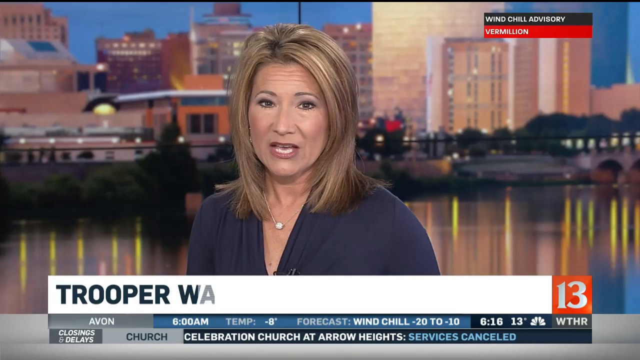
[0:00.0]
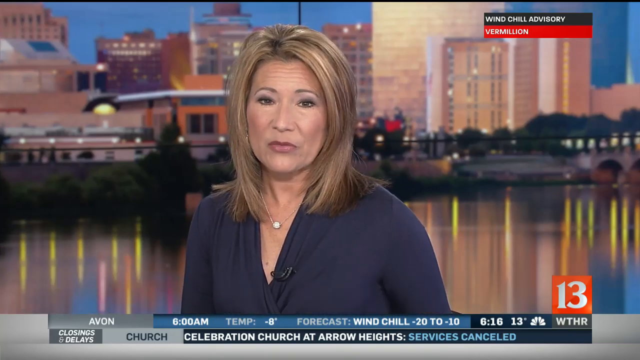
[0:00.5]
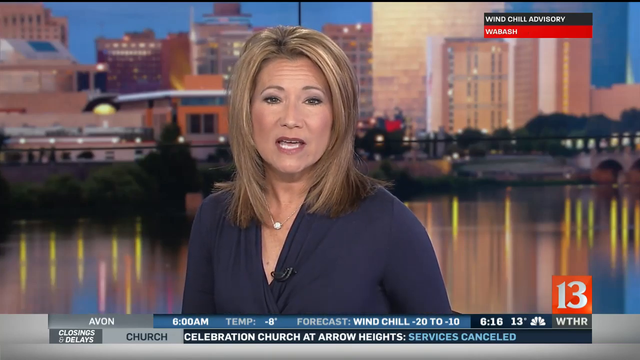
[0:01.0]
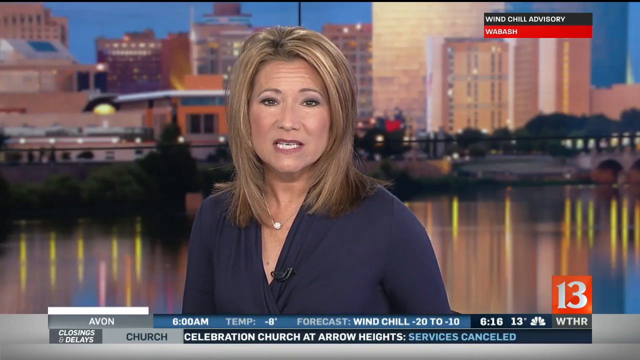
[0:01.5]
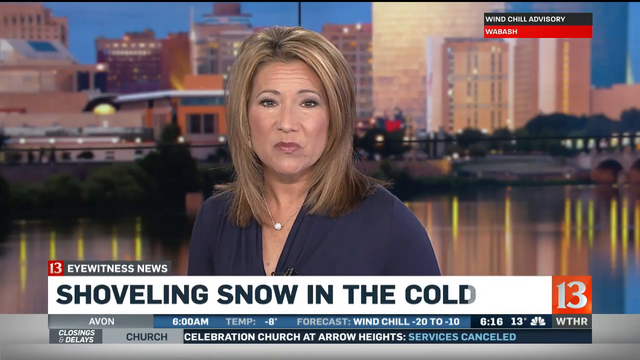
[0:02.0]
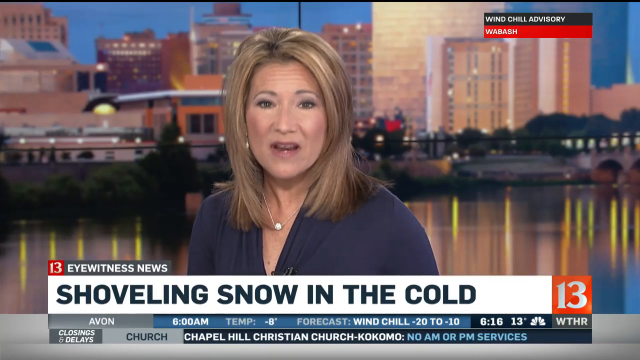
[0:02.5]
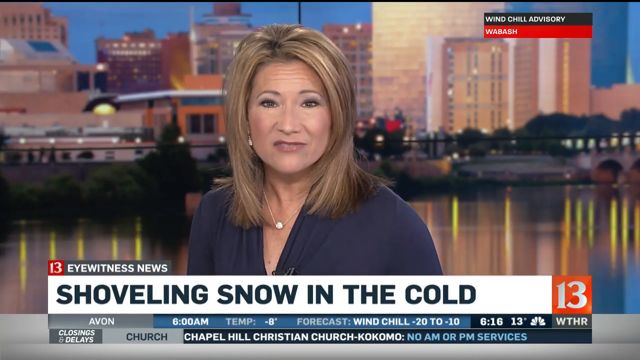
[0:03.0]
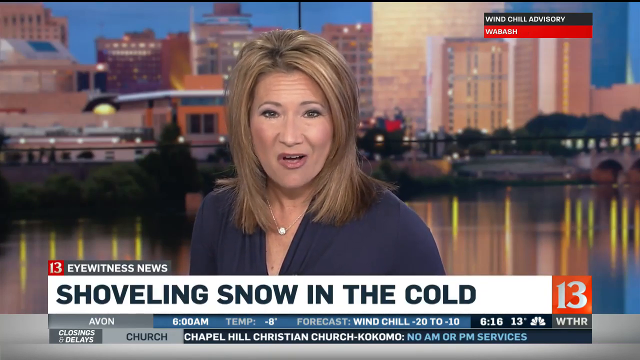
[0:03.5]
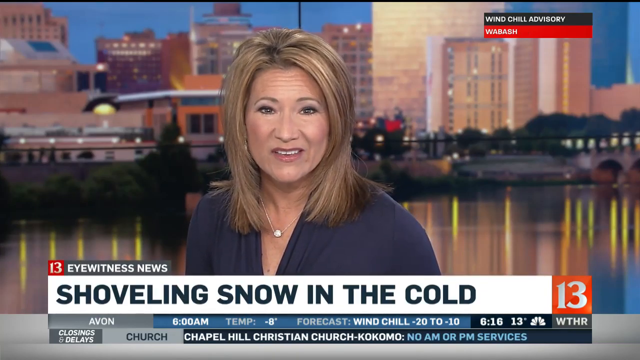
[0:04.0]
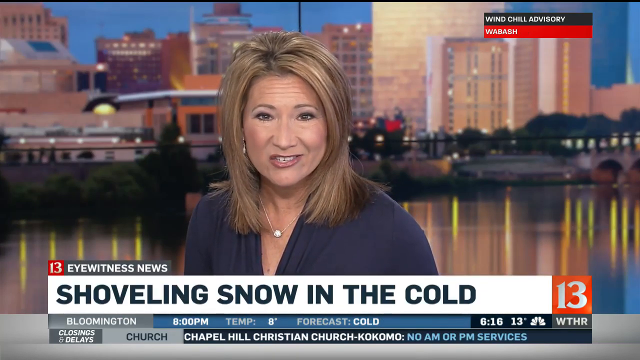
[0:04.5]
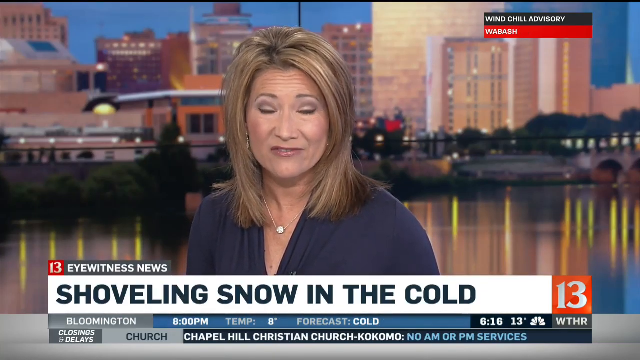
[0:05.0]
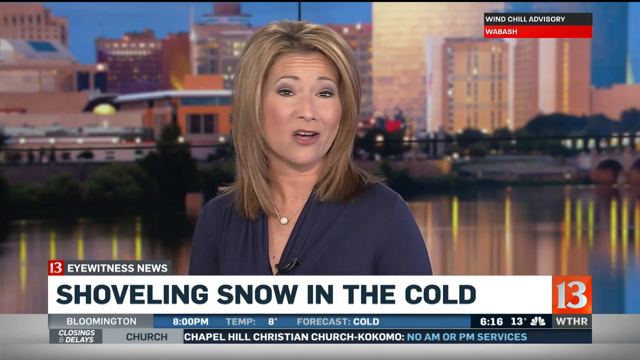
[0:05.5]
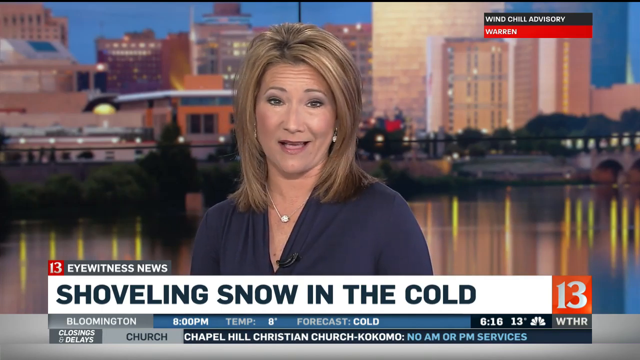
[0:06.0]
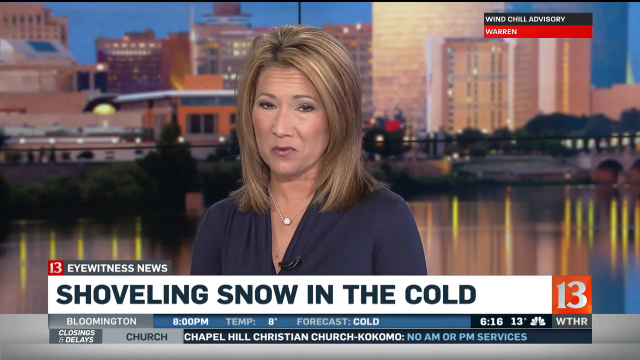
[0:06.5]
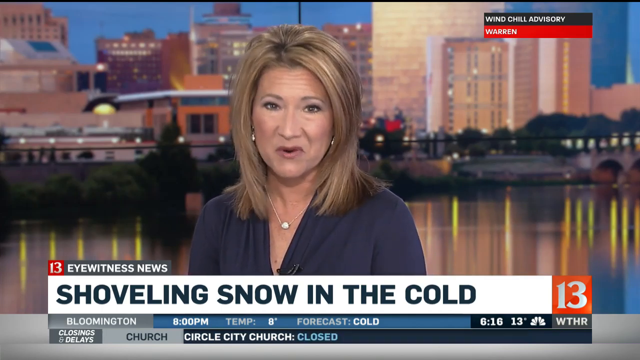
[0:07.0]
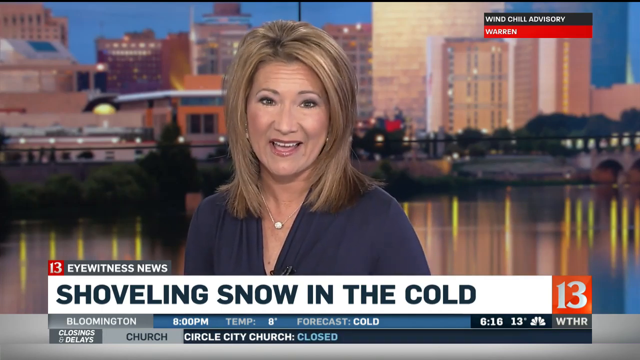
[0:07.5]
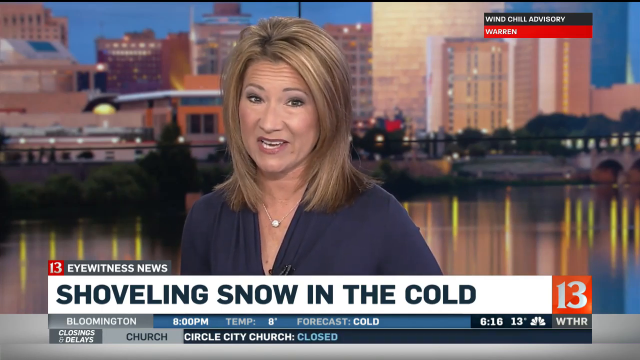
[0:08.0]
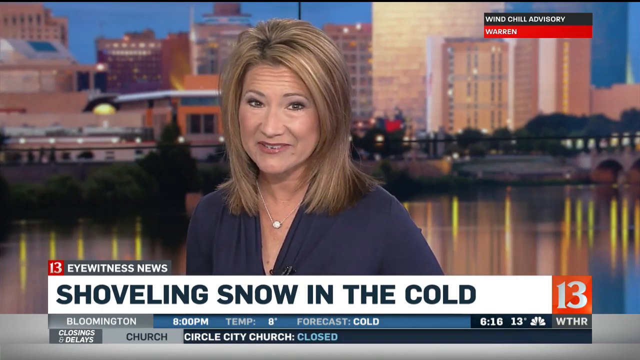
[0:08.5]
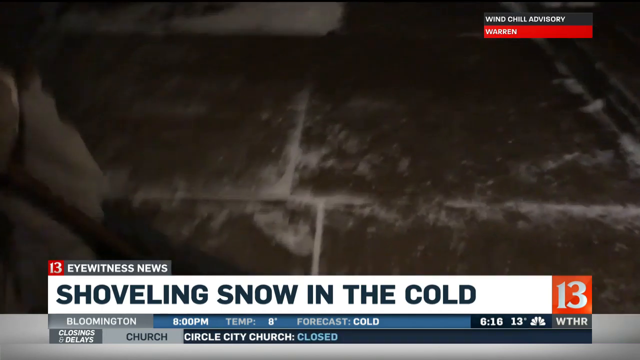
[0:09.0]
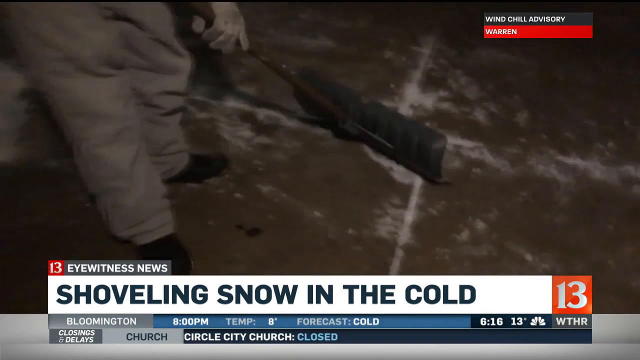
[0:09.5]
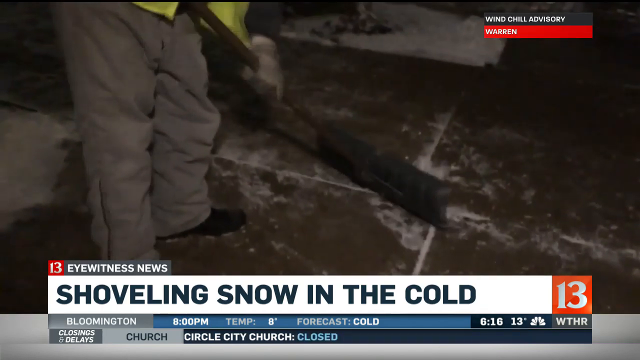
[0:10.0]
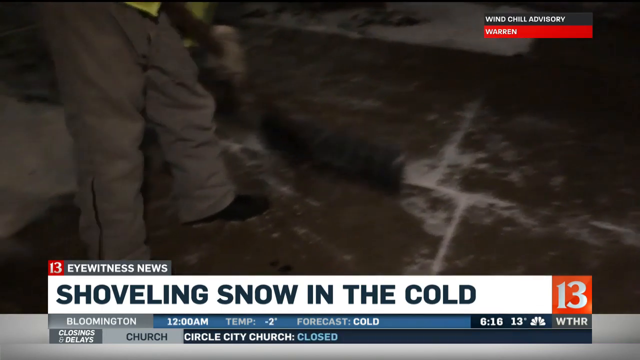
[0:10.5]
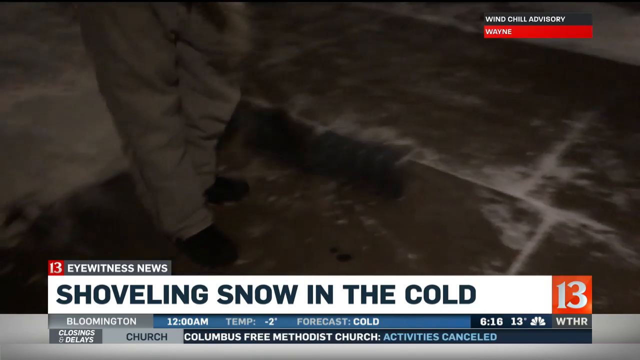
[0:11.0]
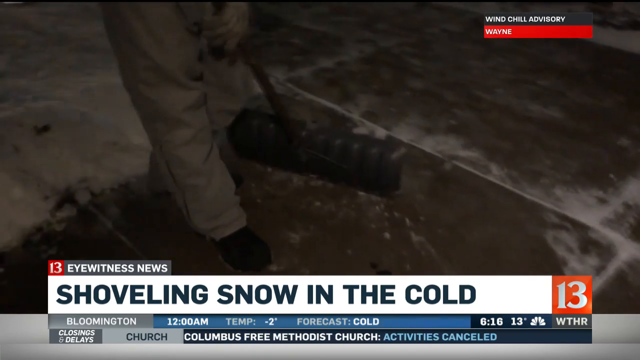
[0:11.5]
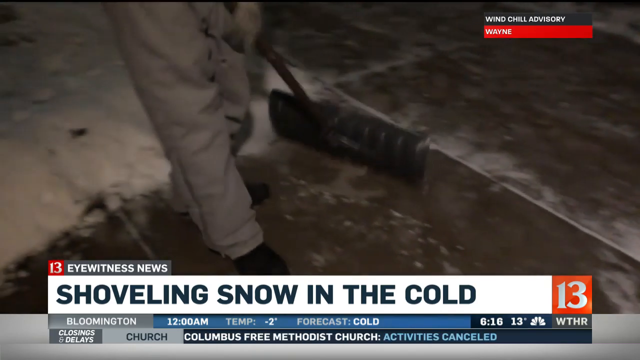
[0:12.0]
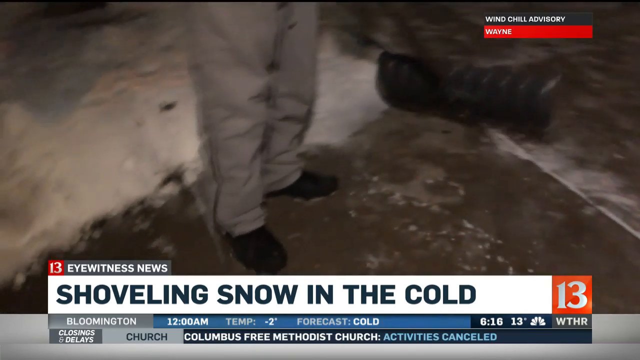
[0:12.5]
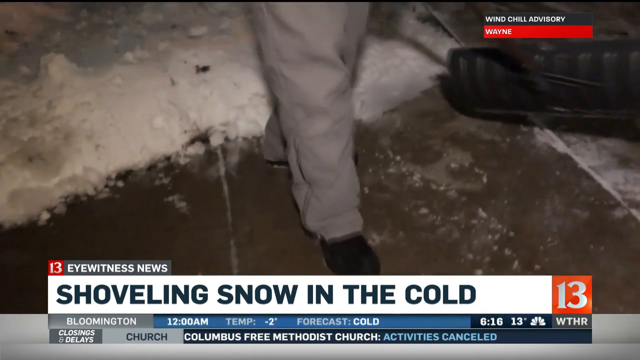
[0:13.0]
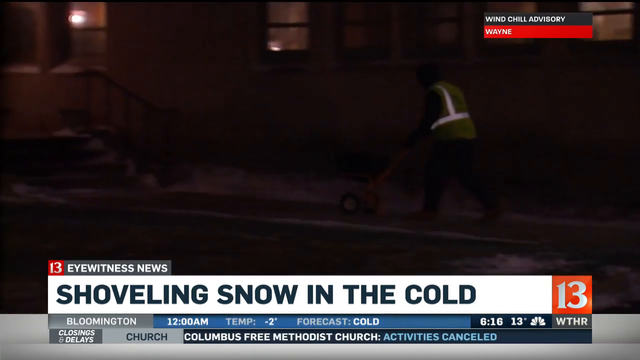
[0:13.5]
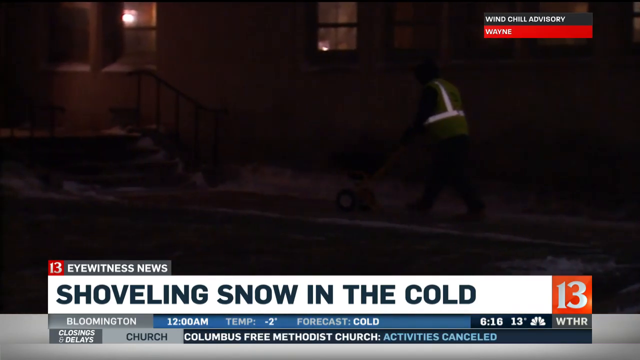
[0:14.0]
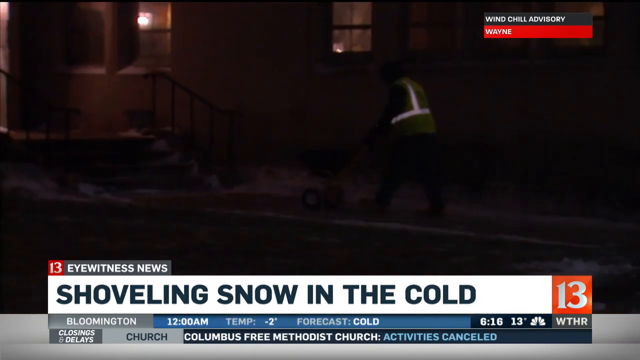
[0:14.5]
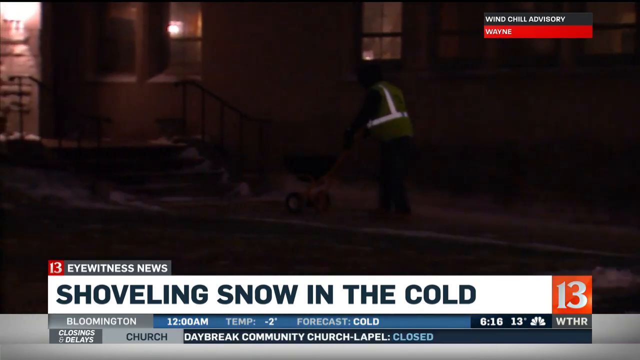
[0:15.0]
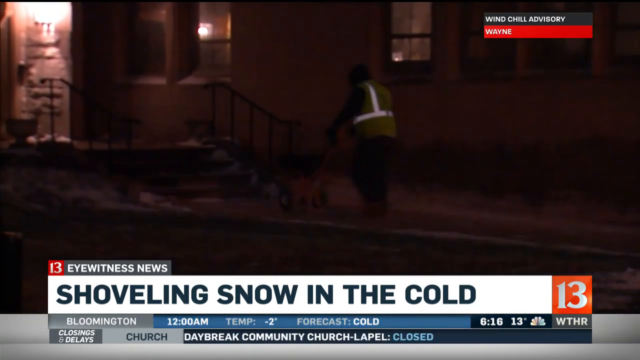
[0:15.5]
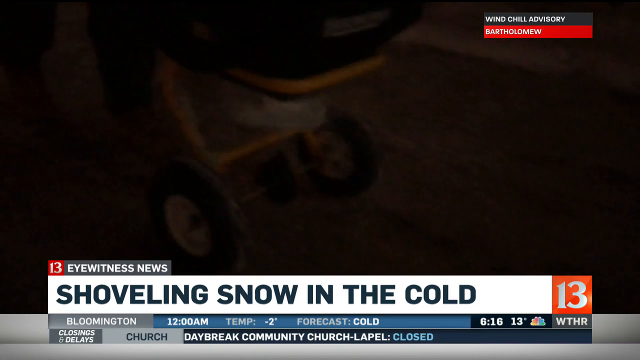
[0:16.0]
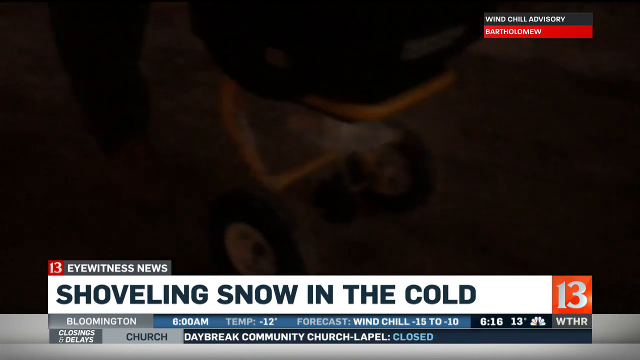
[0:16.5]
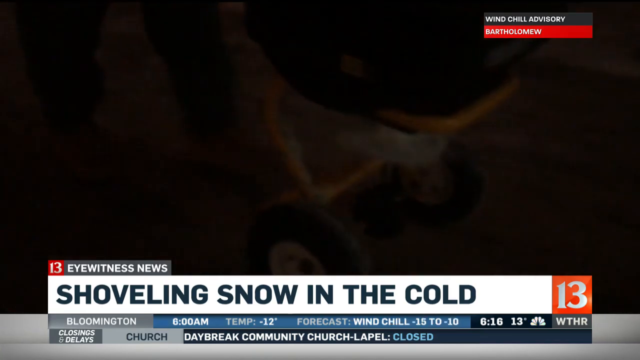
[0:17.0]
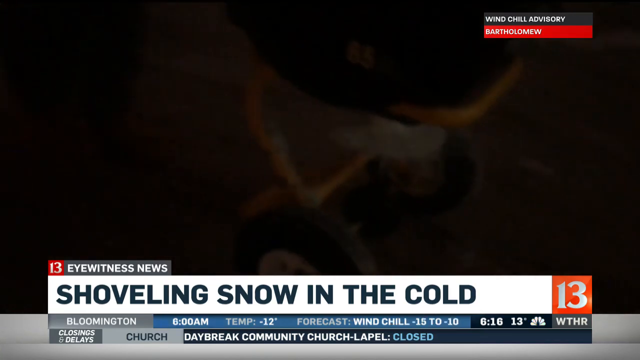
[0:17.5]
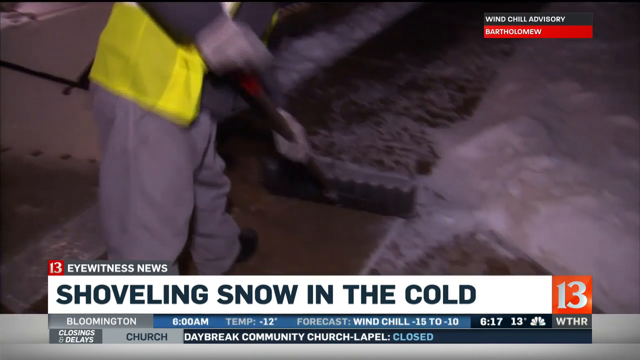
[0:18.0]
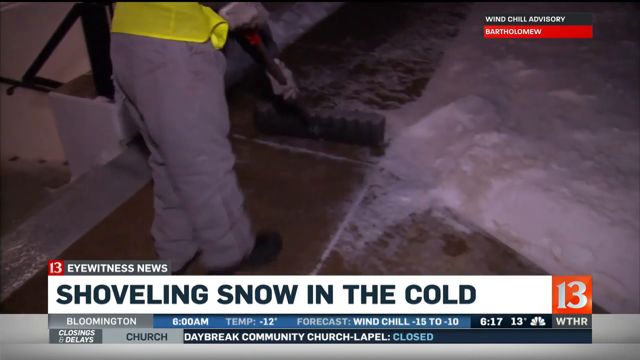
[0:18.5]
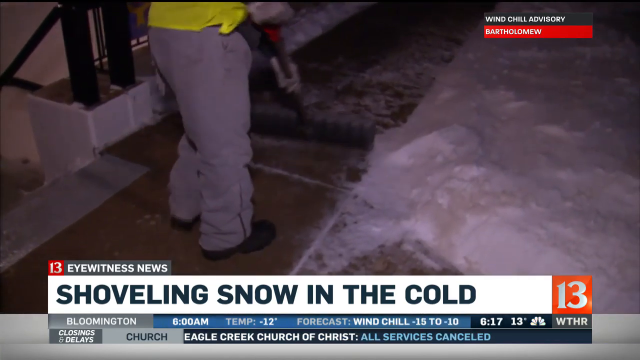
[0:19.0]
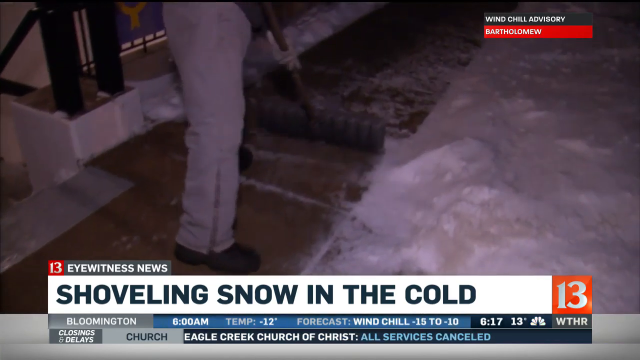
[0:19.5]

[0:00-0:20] A woman in her mid-40s with blonde hair, wearing a navy top, is named Zupa. She presents a report on people shoveling snow in the cold as it snows. Weather information for Avon appears: 6 a.m., a temperature of negative 8, a forecast wind chill, and mention of closings and delays due to the cold and snow in the city. A few people shovel snow, working hard and pushing through the snow with their shovels.